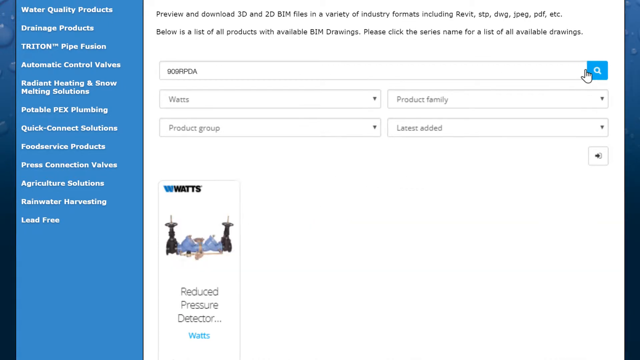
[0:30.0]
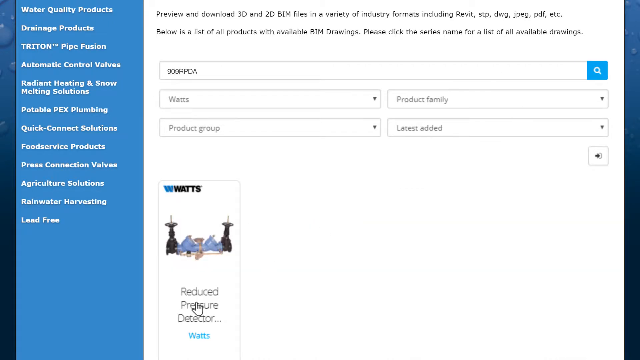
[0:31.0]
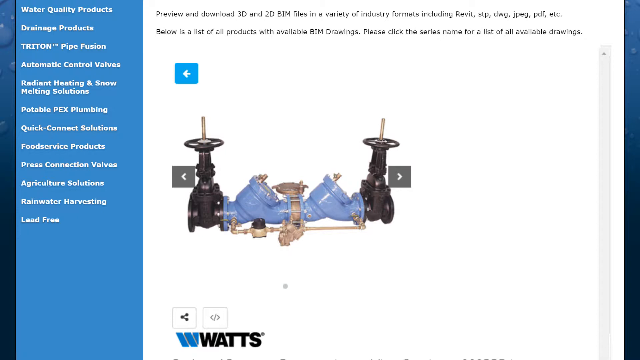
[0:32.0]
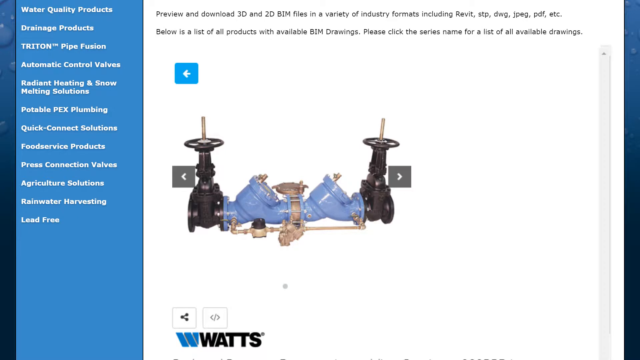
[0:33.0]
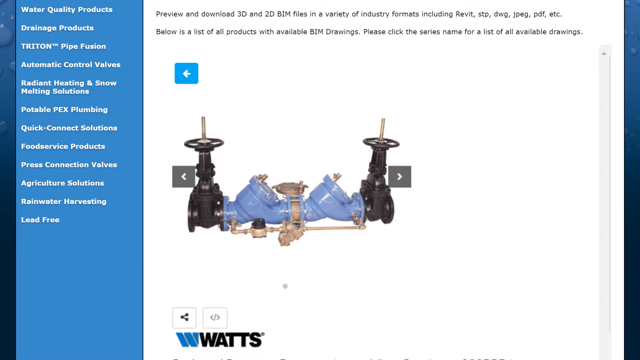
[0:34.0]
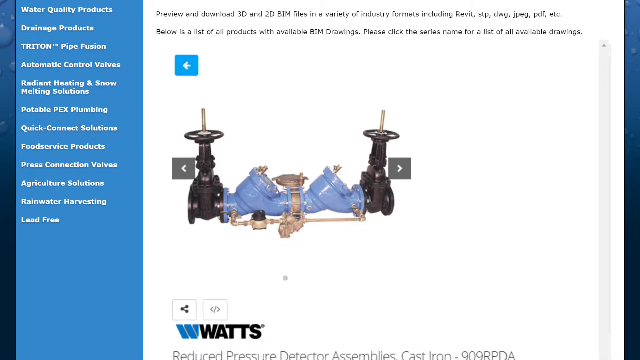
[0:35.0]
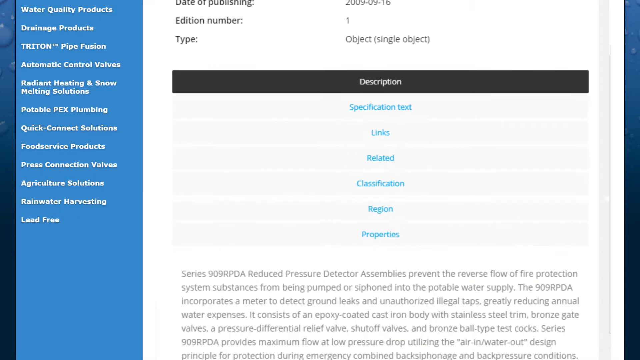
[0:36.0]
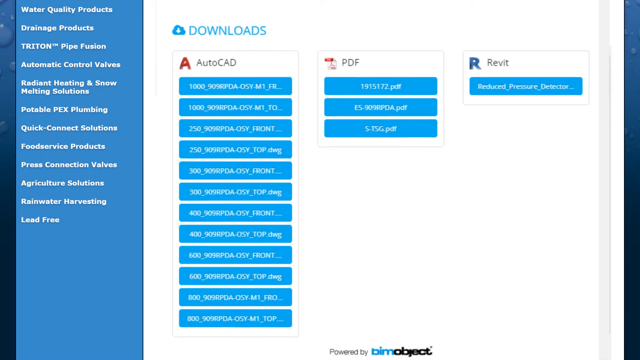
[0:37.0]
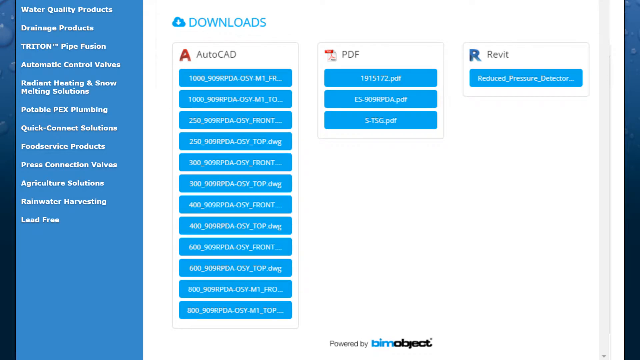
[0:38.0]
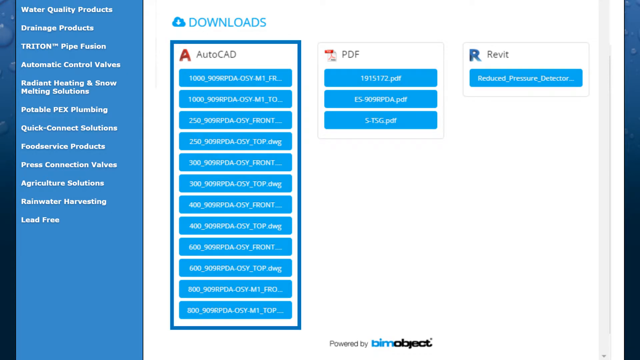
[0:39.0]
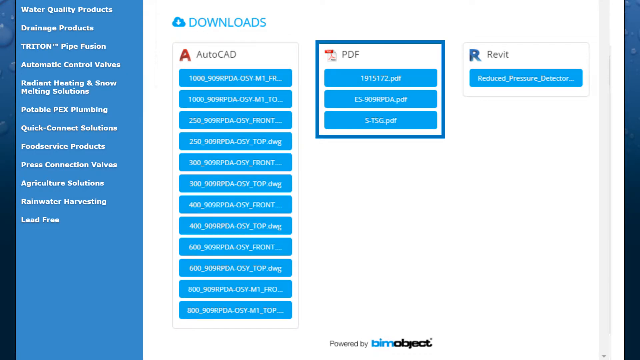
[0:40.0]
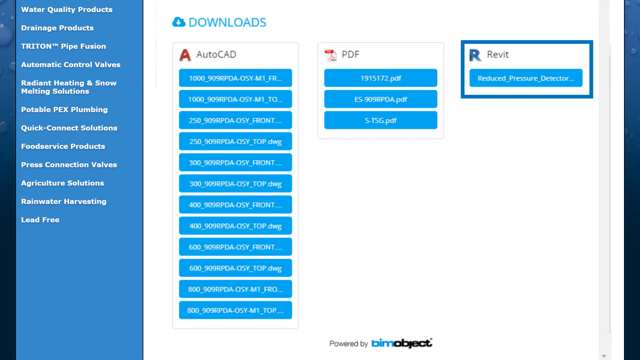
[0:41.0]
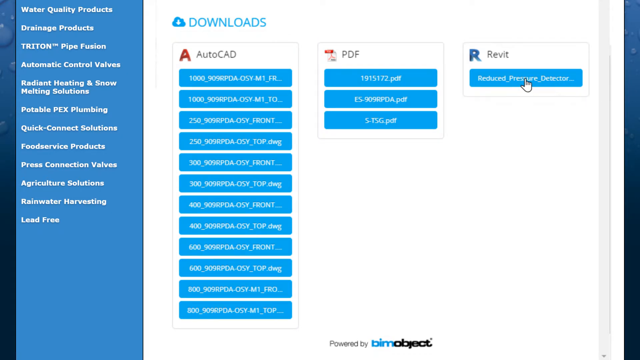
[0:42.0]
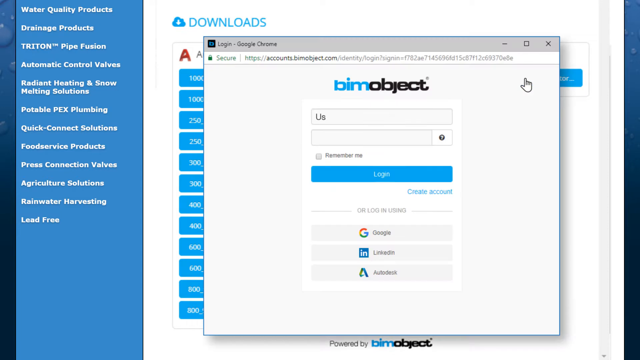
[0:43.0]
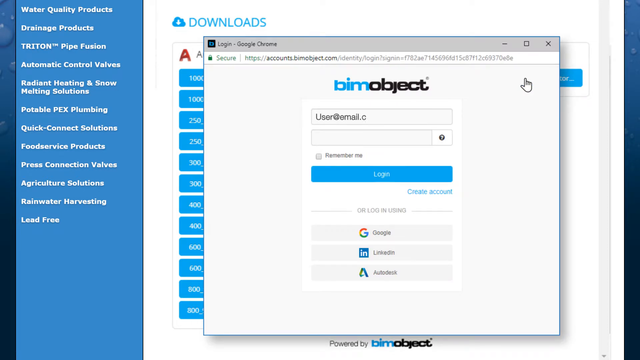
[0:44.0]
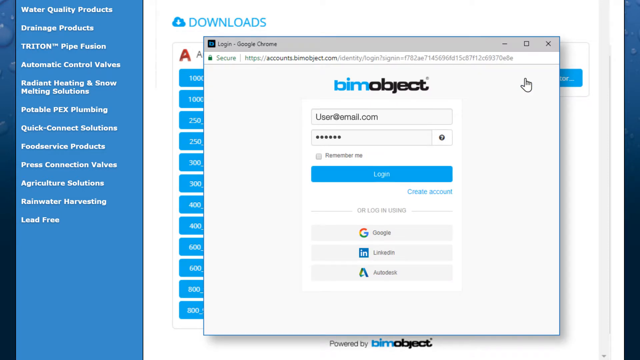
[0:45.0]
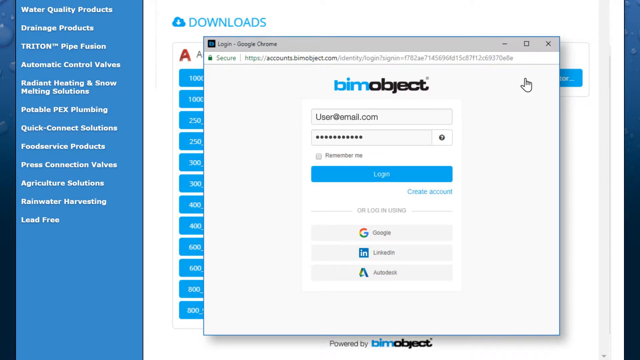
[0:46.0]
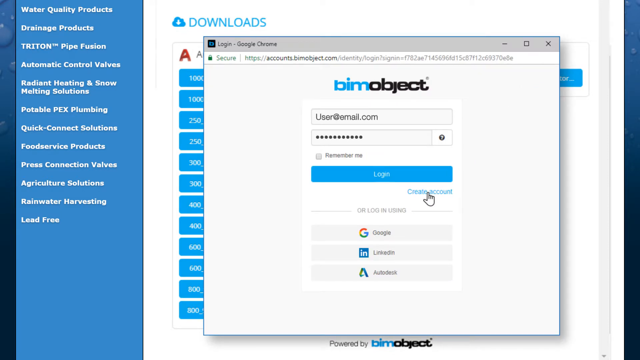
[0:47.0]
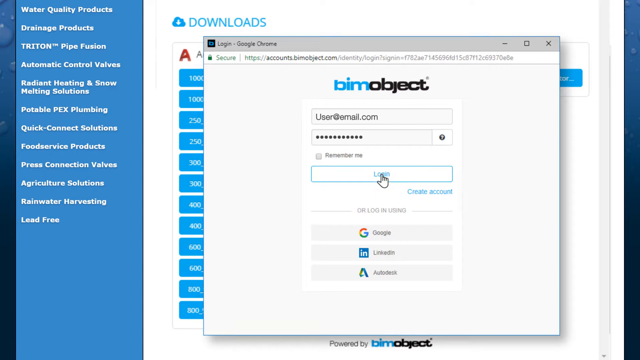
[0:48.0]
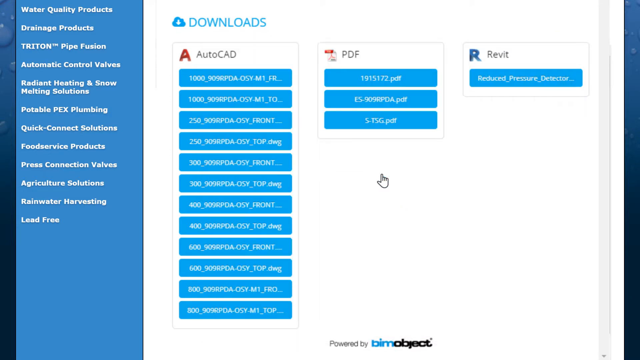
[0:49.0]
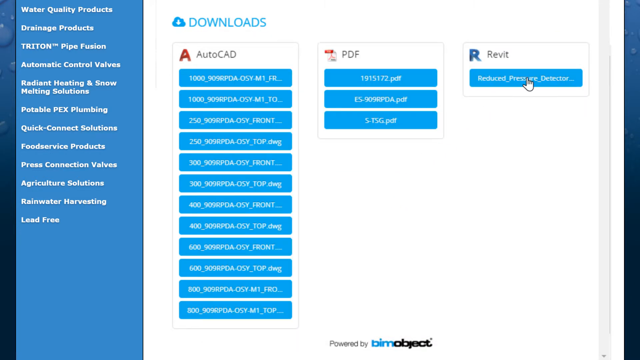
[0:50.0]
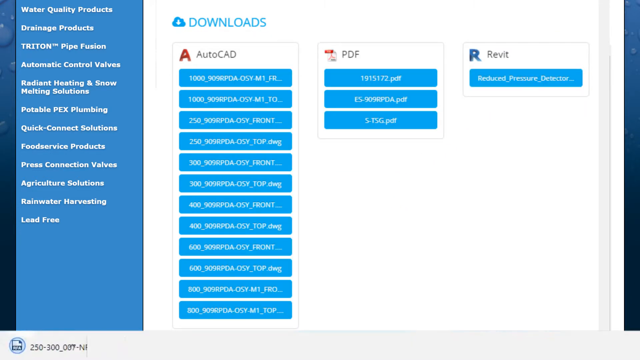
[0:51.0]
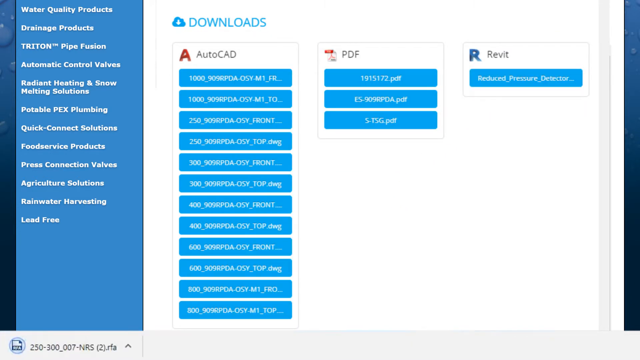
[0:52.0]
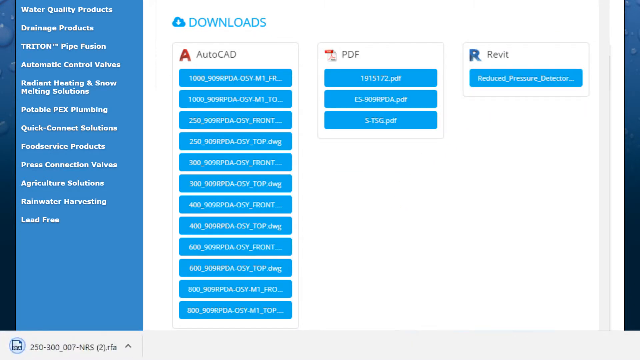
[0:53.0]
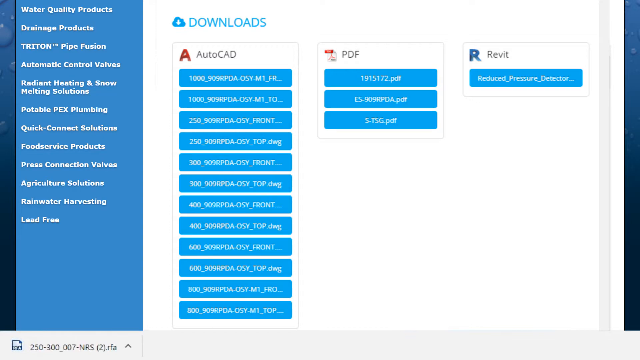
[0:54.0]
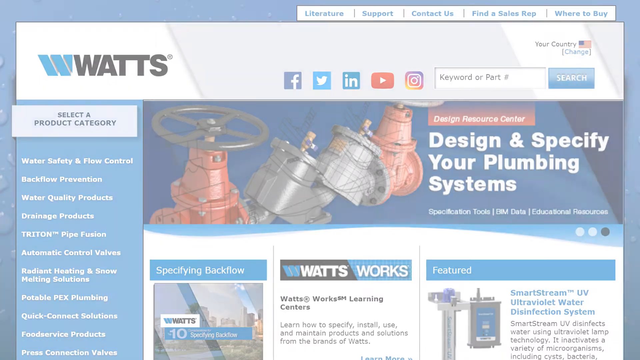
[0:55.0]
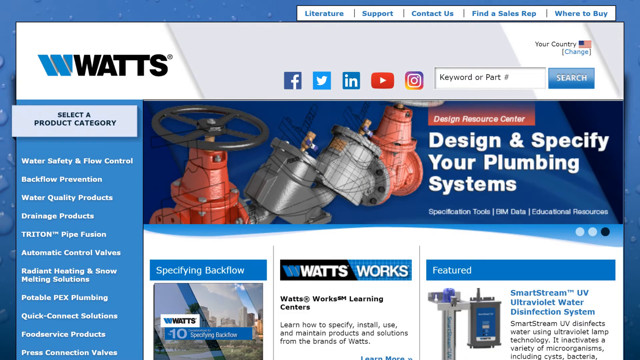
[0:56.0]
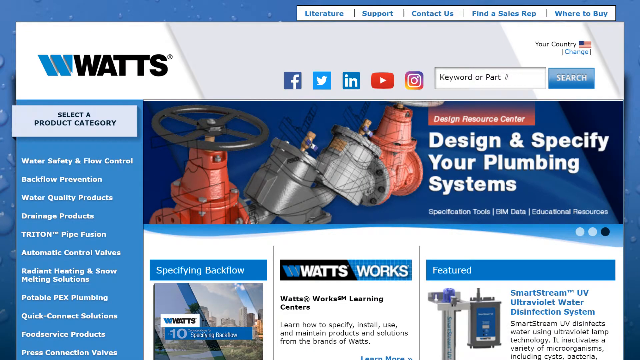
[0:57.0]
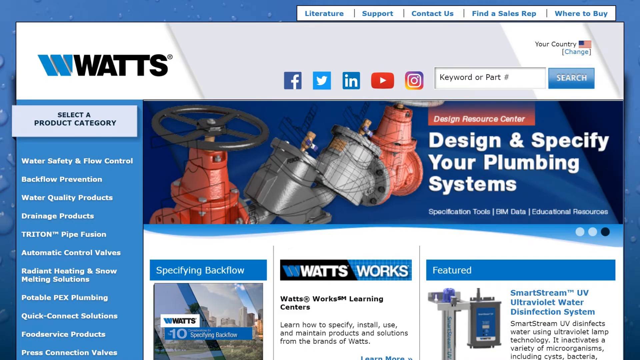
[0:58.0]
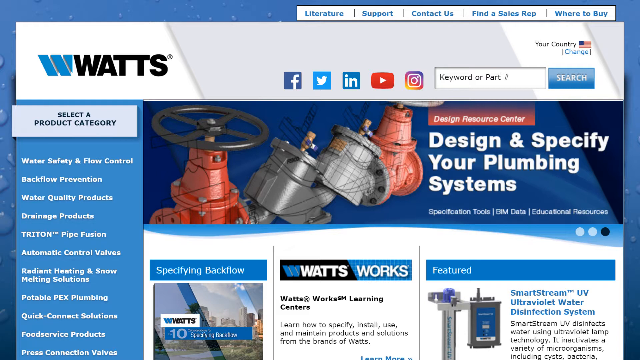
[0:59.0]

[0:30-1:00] He shows how to access and download WATS BIM content, scrolling through the site, and the guy is seen talking to his people. He keeps scrolling and then goes to the resource center, scrolling down through different options, including sharing, hiding the preview, and downloading 2D BIM files. Underneath is a search area where the product family, latest added and product group can be chosen, and below that are images of the different products. He clicks on a page and types in a name, and a piece of BIM equipment, the product he clicked on, is shown. The page then goes down to the PDF.